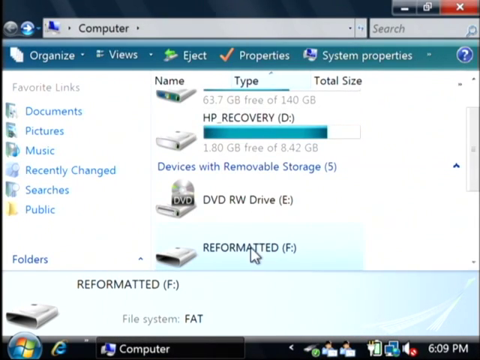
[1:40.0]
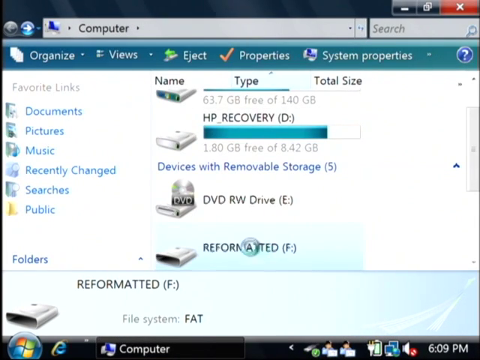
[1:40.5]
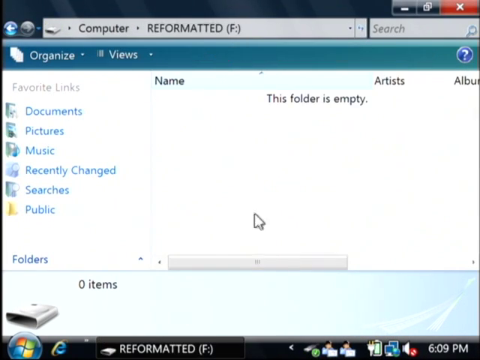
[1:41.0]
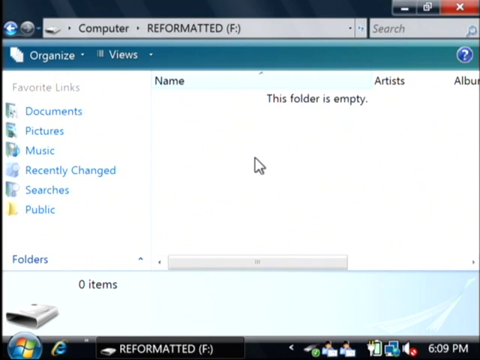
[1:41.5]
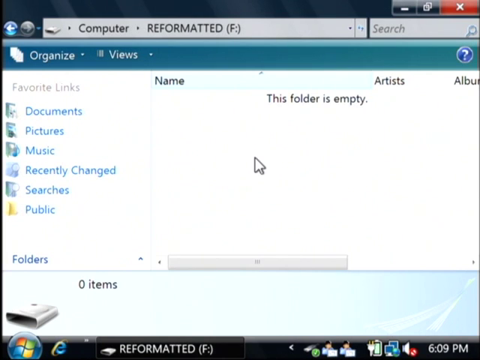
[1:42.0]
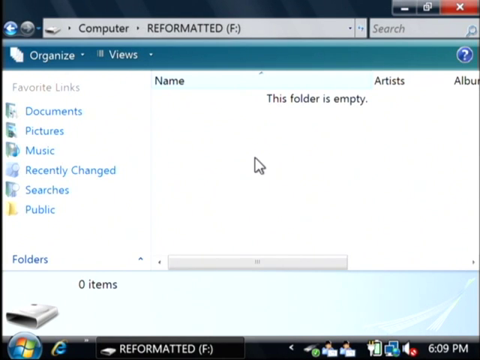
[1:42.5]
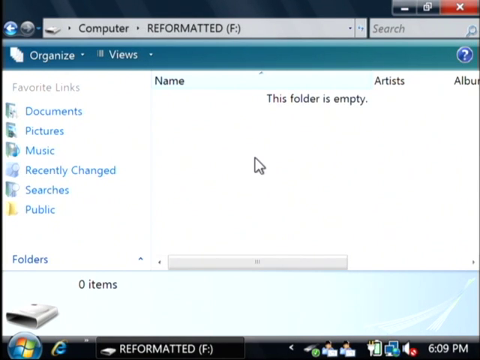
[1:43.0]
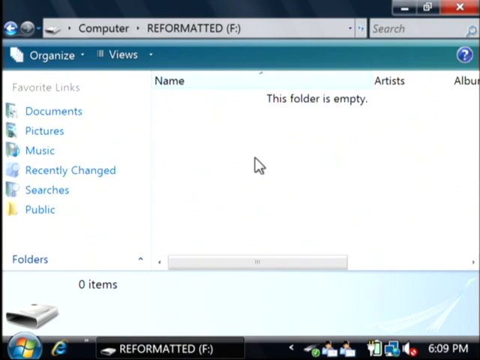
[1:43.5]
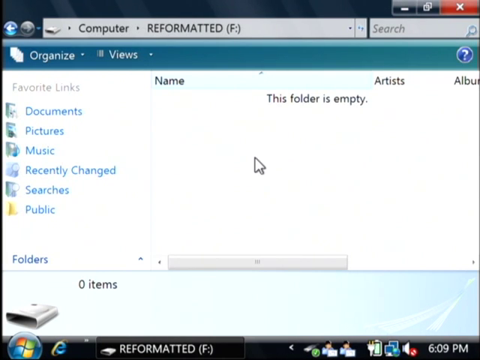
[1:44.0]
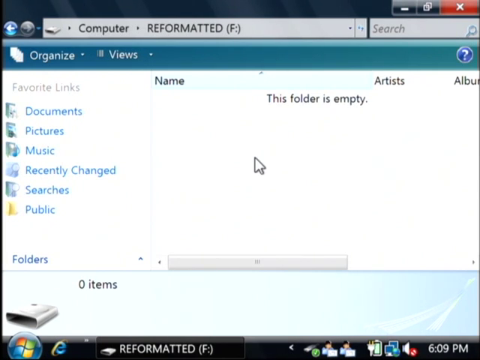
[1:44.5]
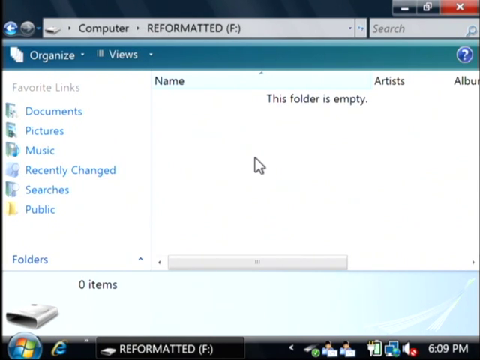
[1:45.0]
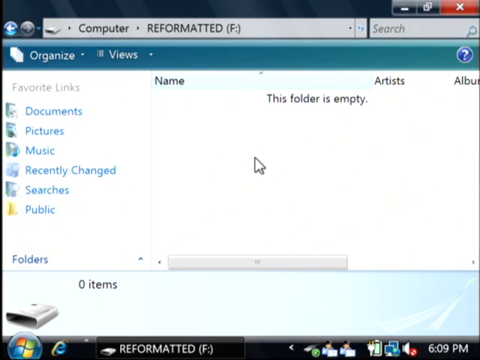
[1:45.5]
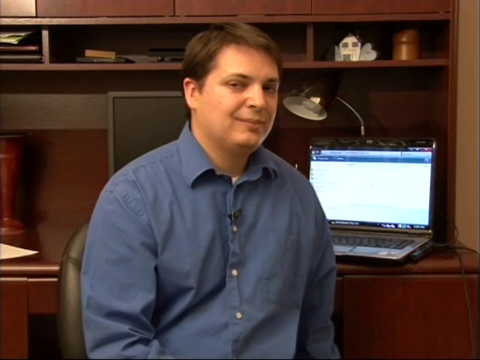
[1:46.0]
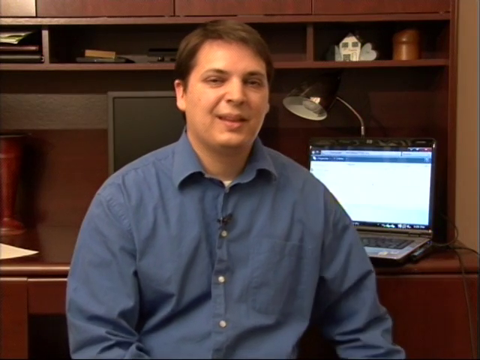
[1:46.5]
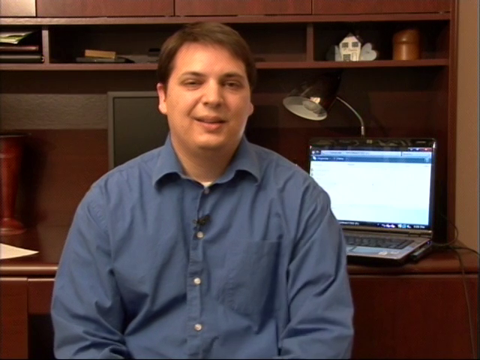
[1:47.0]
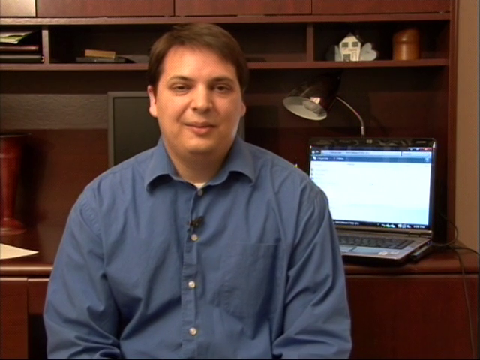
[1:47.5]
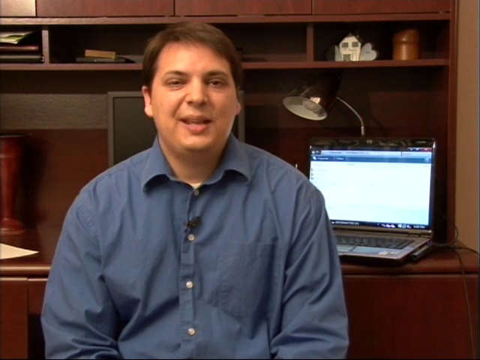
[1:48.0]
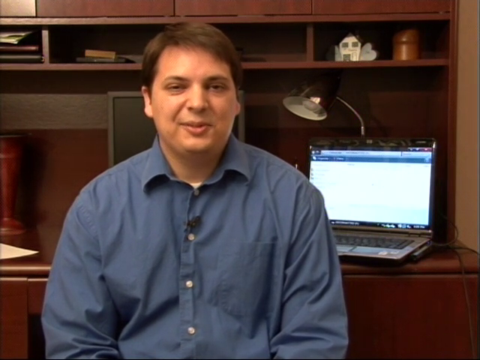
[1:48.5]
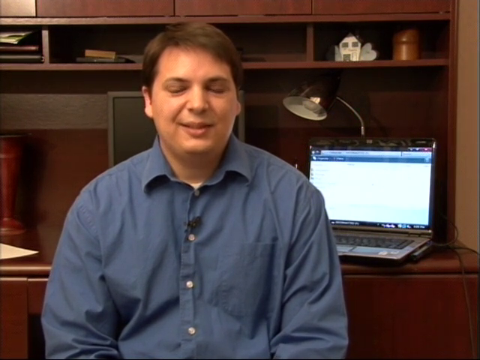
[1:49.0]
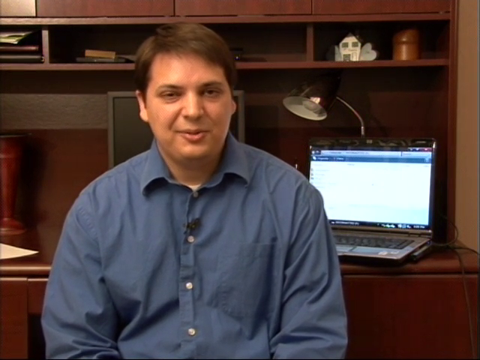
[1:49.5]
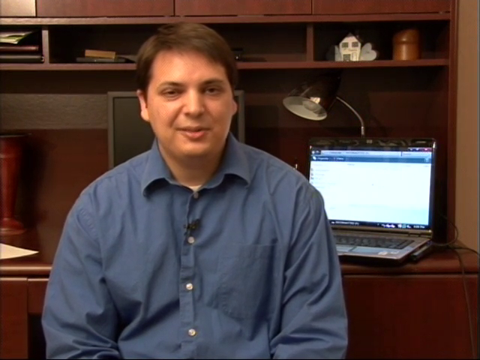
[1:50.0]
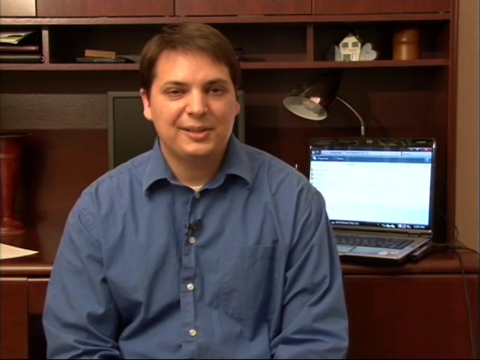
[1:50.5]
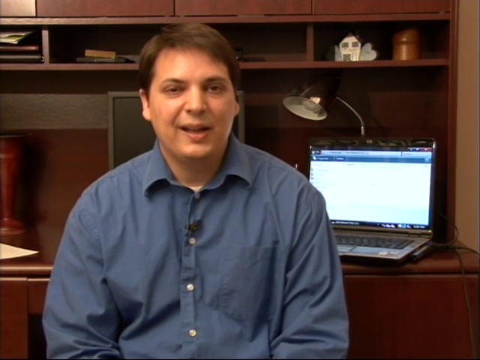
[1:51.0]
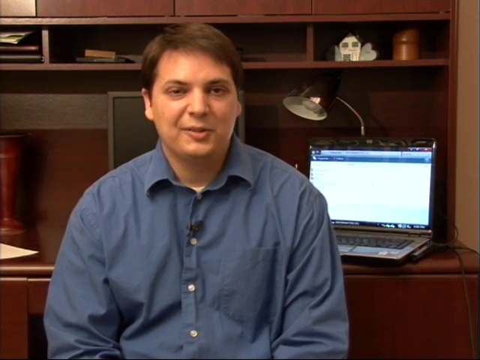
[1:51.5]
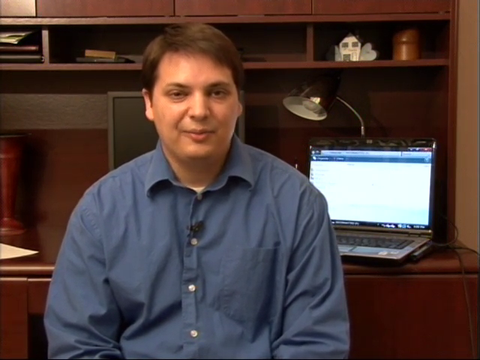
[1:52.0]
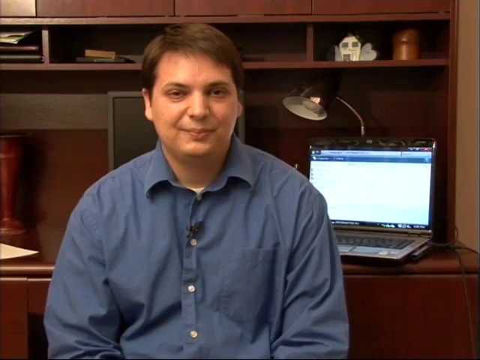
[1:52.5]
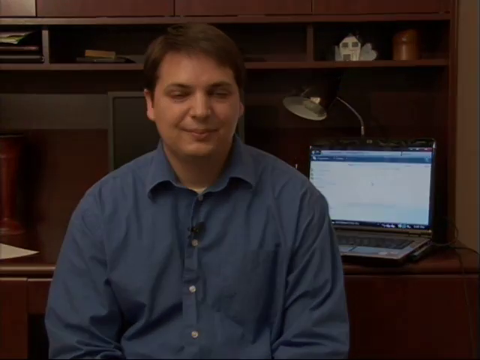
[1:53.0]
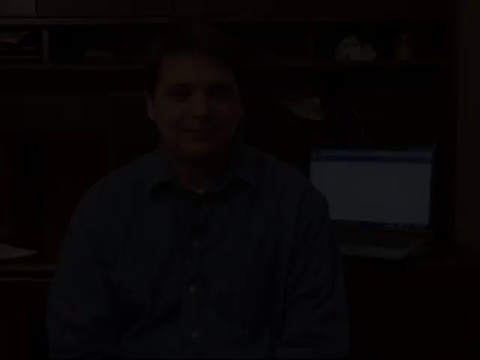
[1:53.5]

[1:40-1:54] With the format window closed, the reformatted F window is shown, saying the folder is empty. The man turns away from the computer on the desk in front of him to face the camera and talks, his lips moving. More of the room behind him is visible: a large bureau, a lamp, a speaker and various office equipment. The screen then turns black.